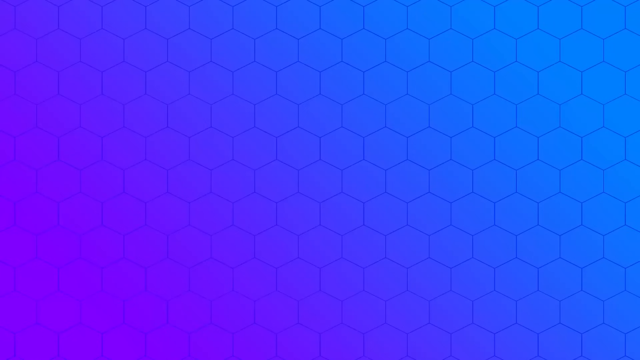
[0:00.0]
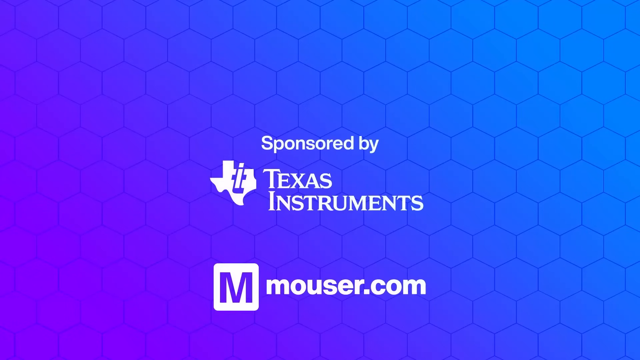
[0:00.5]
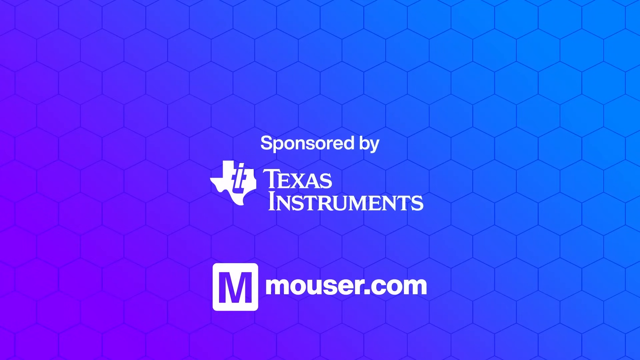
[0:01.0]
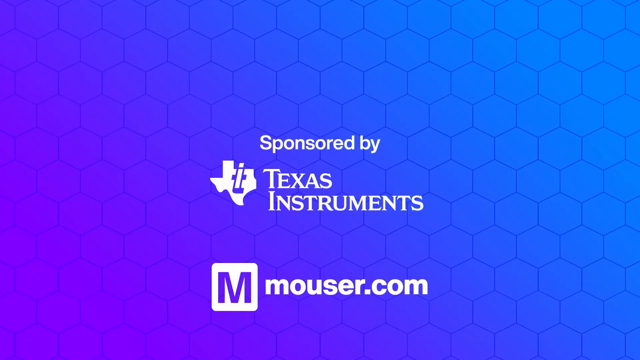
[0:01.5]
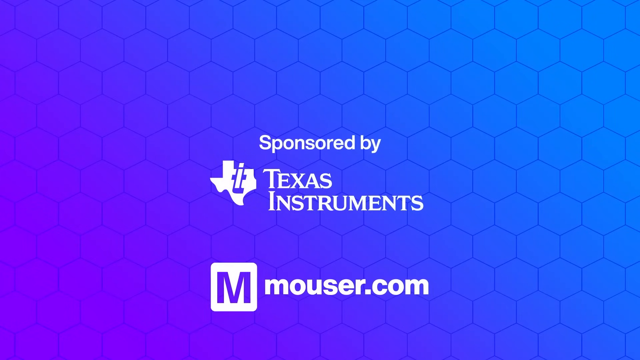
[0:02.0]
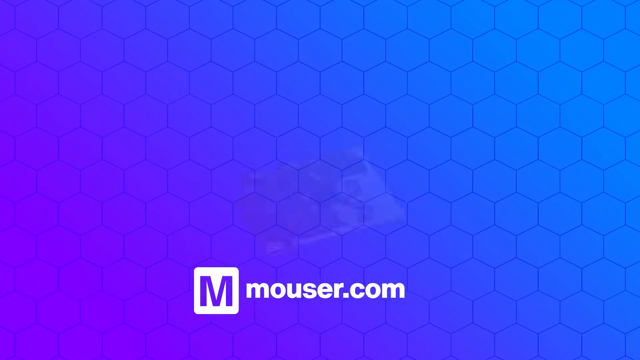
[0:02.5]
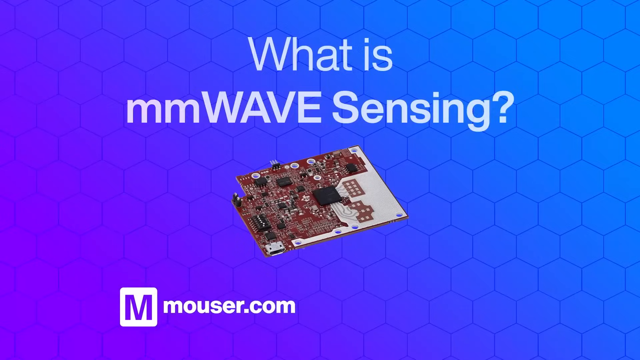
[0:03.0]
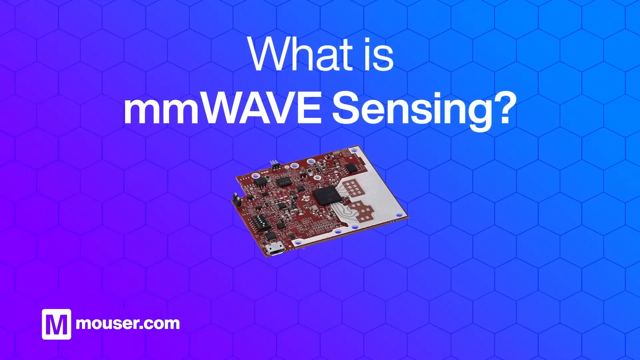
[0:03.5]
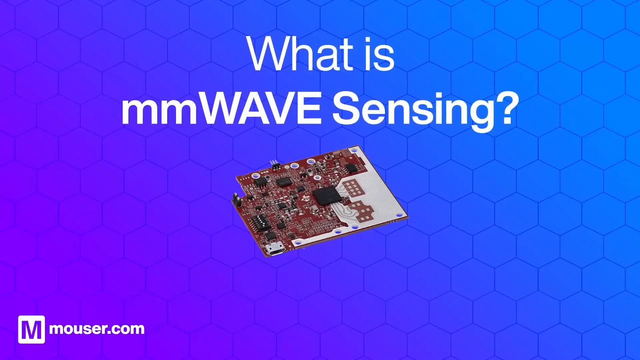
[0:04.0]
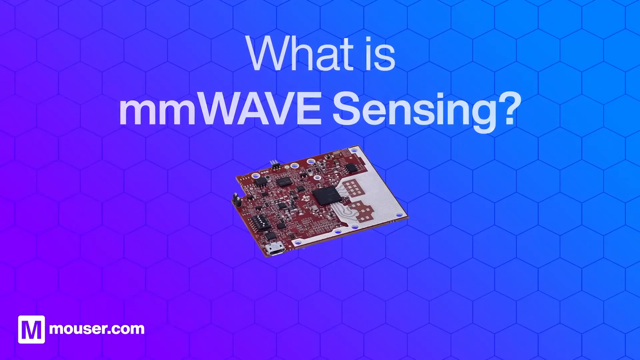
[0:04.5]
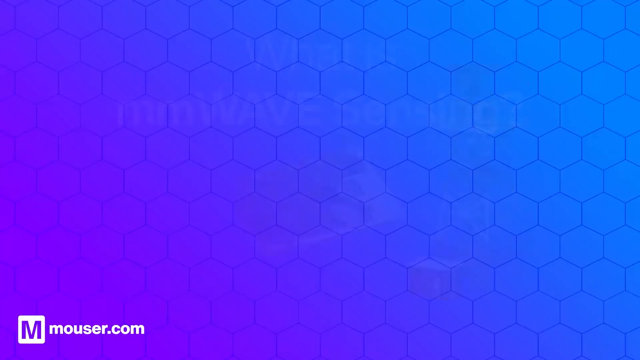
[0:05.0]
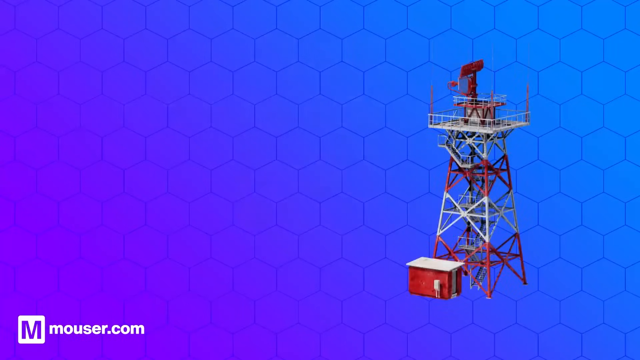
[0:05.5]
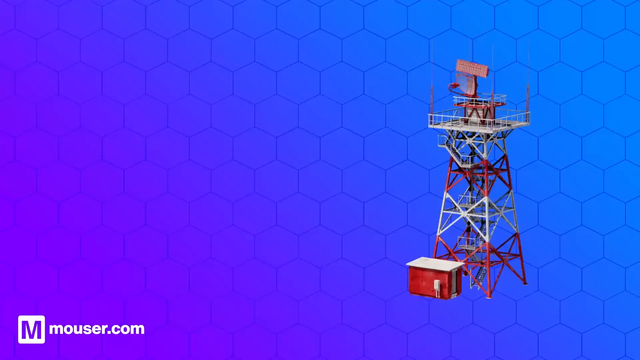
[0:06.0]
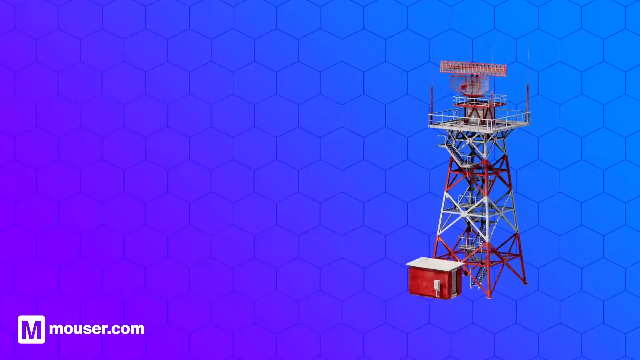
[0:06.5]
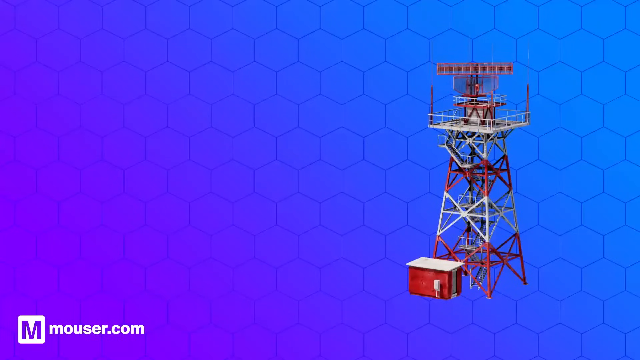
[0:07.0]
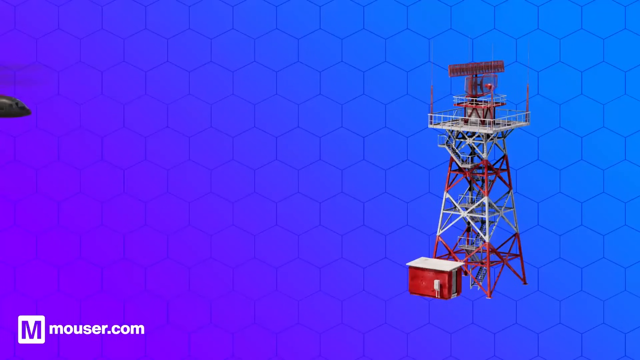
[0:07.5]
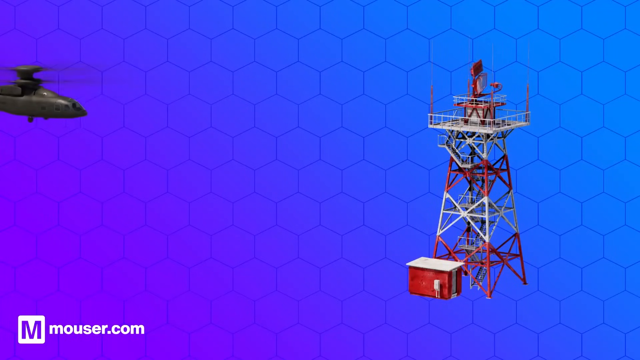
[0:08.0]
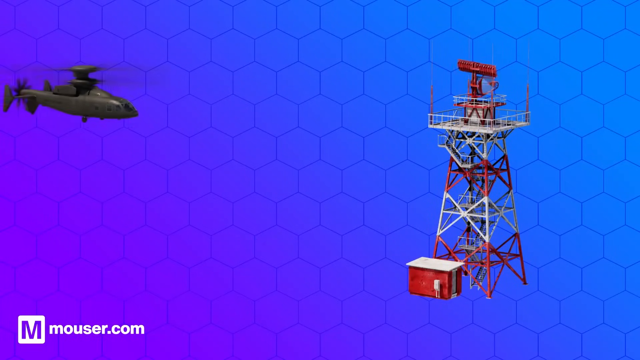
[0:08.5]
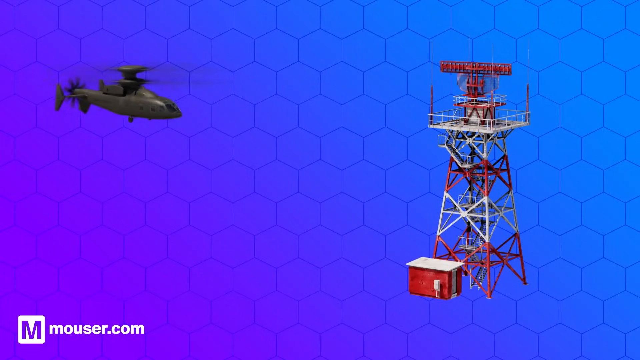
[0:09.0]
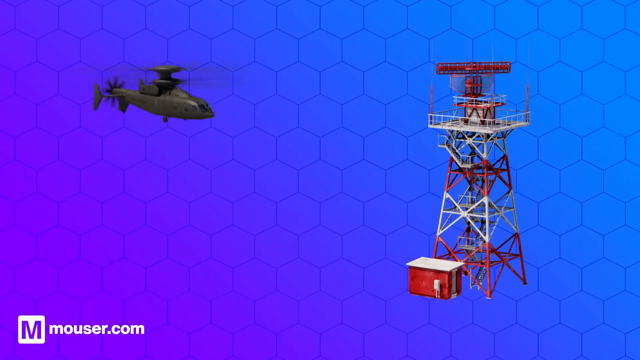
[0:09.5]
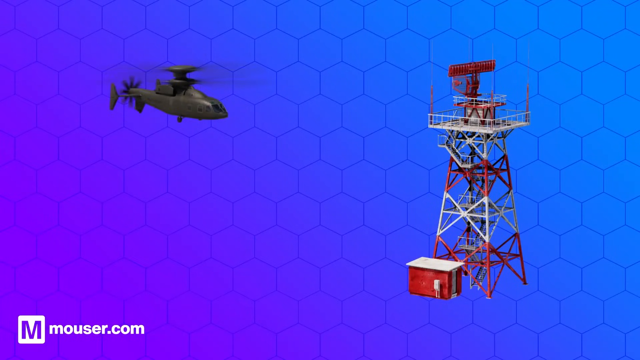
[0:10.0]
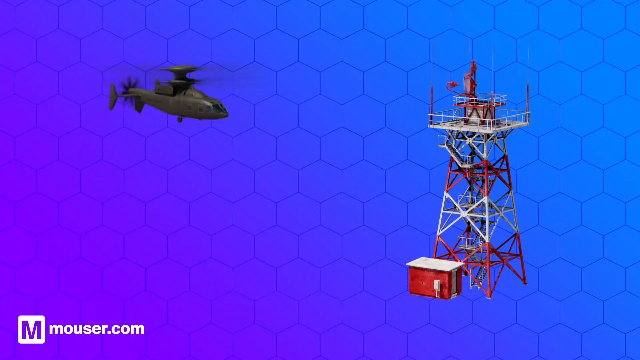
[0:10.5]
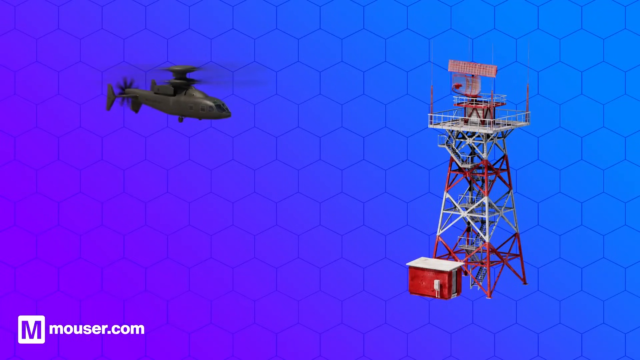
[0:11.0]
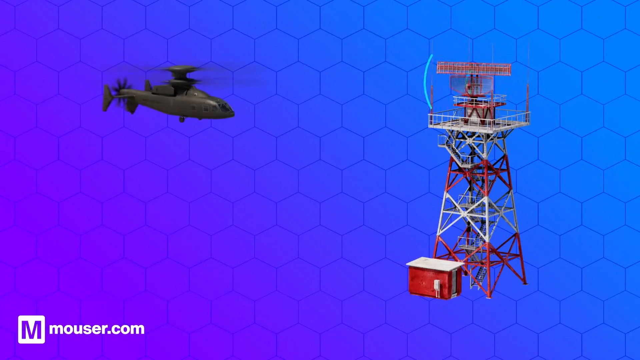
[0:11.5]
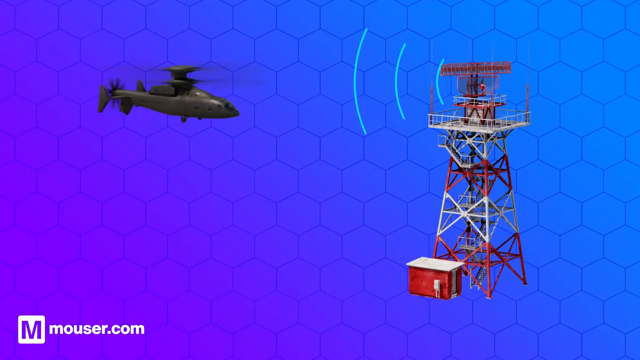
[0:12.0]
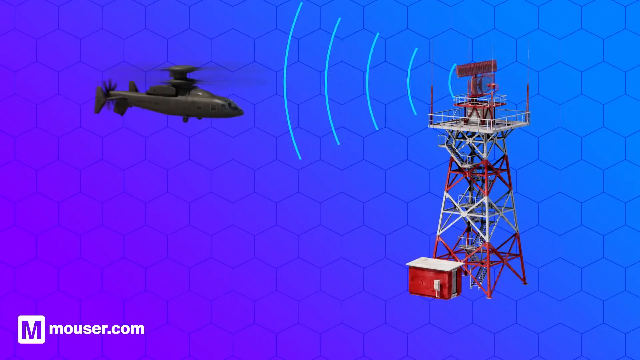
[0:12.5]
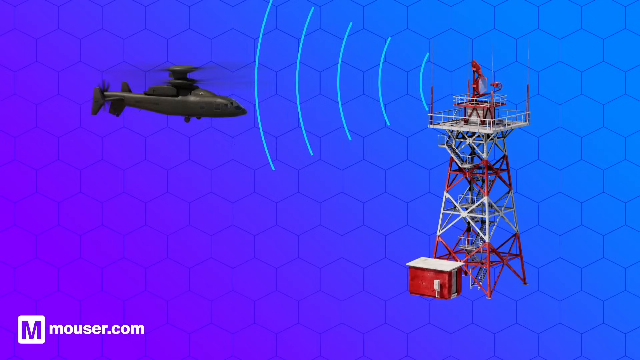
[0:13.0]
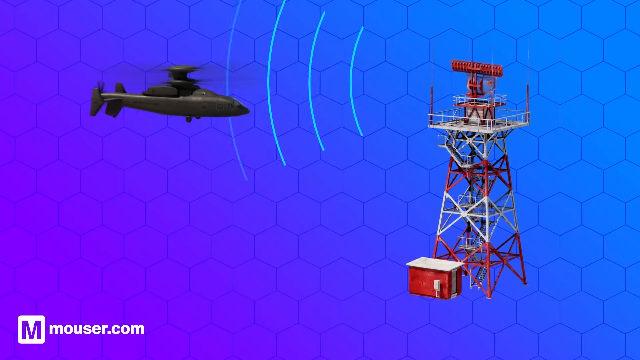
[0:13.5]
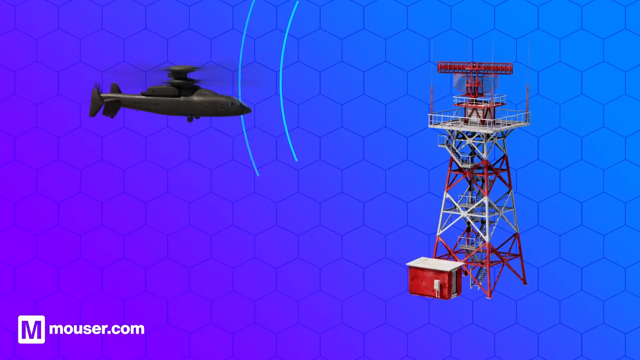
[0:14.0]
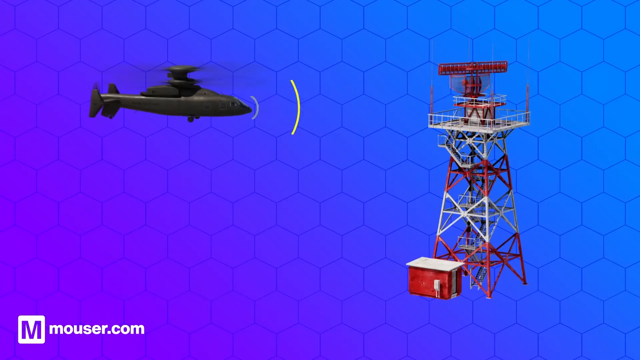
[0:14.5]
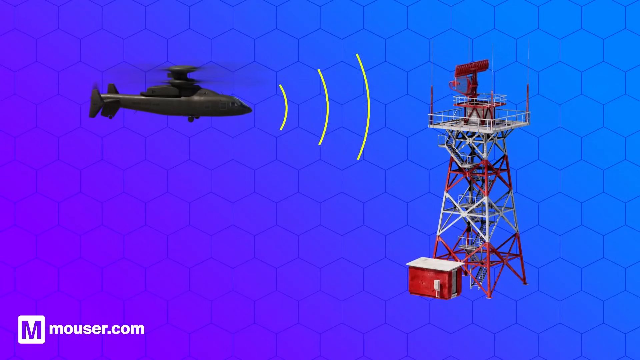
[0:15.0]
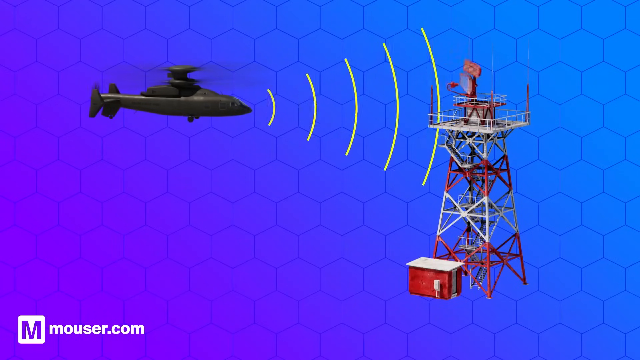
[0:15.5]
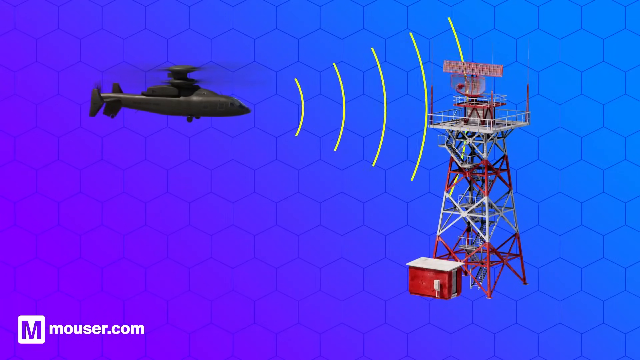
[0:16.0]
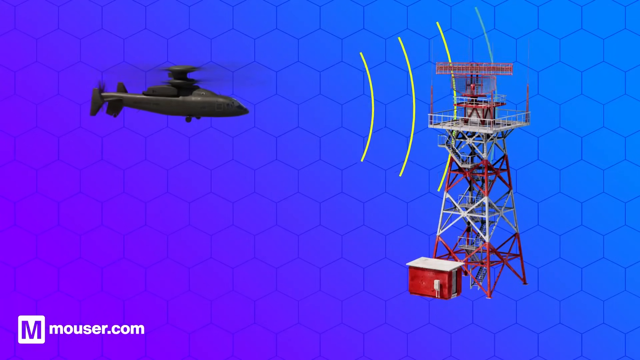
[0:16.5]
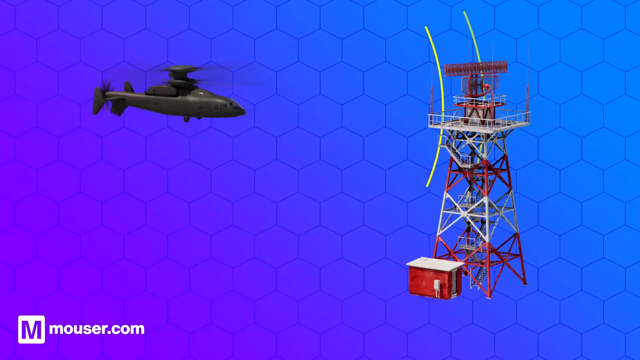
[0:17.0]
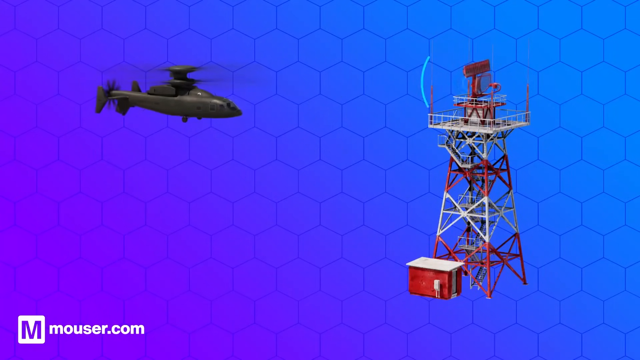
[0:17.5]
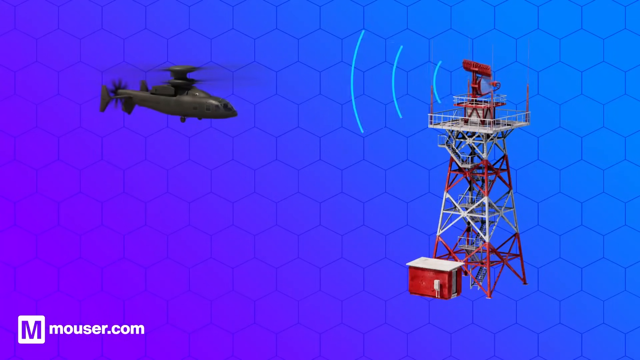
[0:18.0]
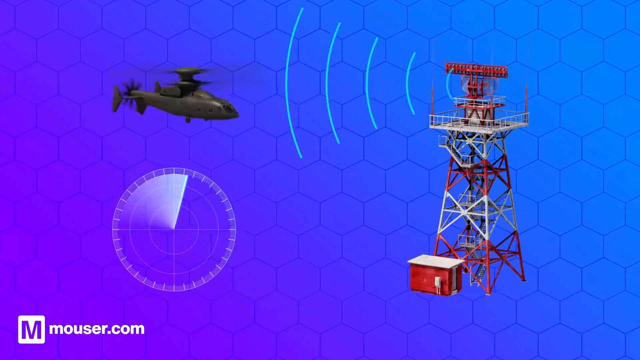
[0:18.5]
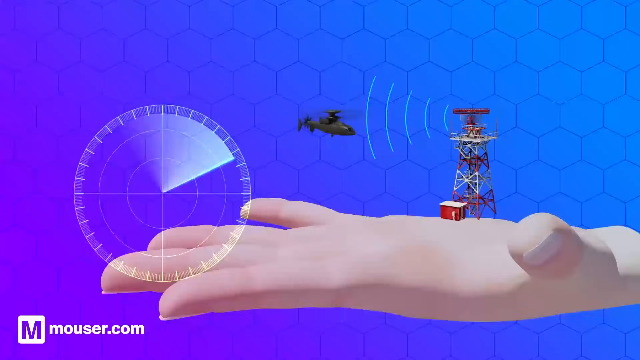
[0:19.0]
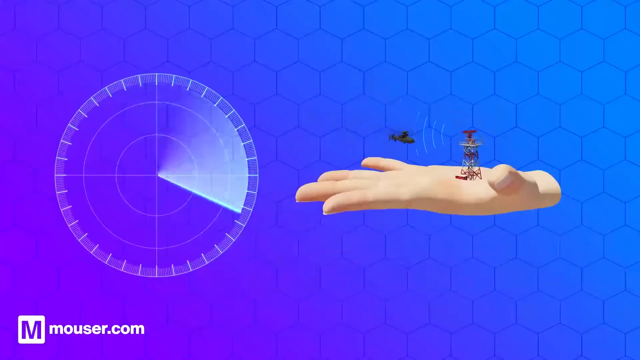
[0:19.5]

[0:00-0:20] The video opens on a bright blue screen with a barely visible honeycomb pattern in the background. In the middle of the screen, white letters read "sponsored by Texas Instruments," with the Texas Instruments logo just to the left of the name, and at the bottom of the screen is "mouser.com." After a couple of seconds, a screen very quickly displays the question "what is MM wave sensing?" with a picture of the inside components of a computer just below it. Next, a spinning red and white tower appears in the right-hand corner of the screen, and a gray helicopter flies in from the left. Signals are sent out from the tower, and signals are sent from the helicopter back to the tower. Finally, the camera pans out to reveal a human hand holding the tower.